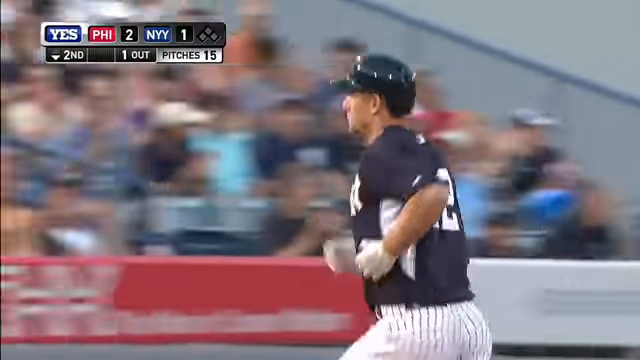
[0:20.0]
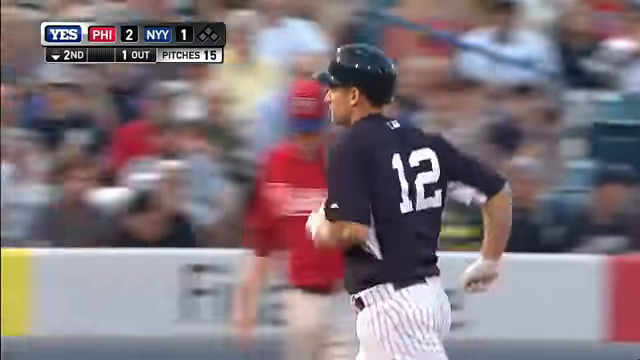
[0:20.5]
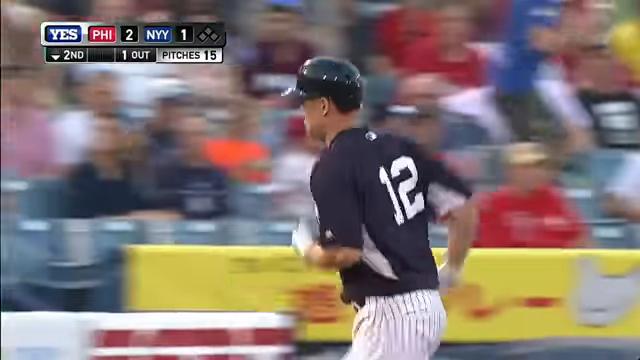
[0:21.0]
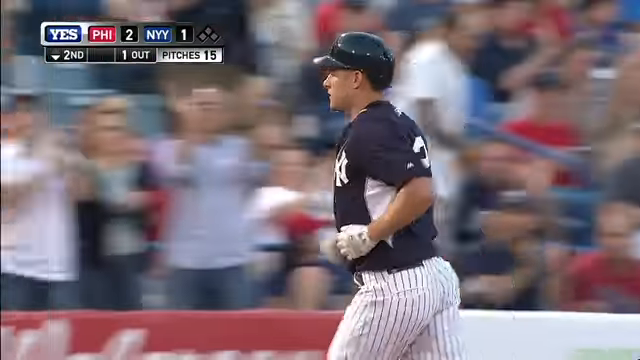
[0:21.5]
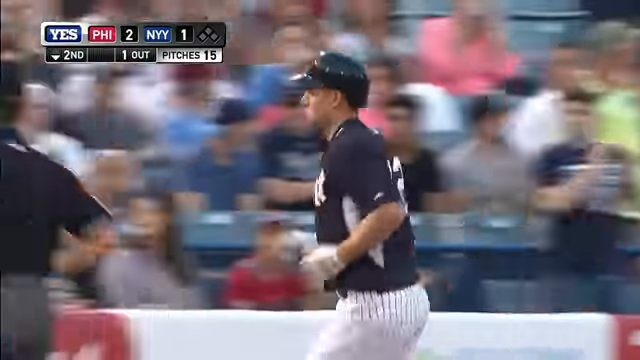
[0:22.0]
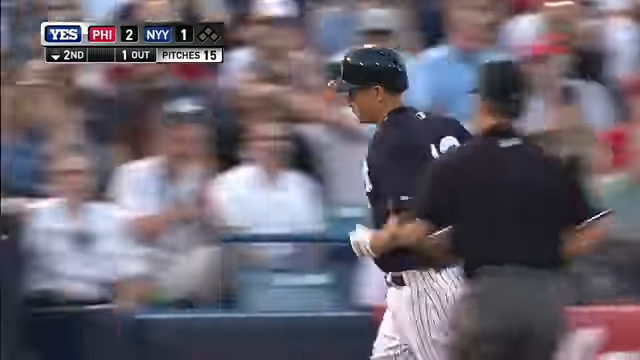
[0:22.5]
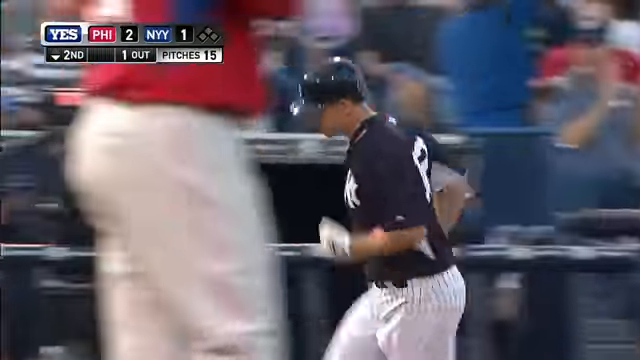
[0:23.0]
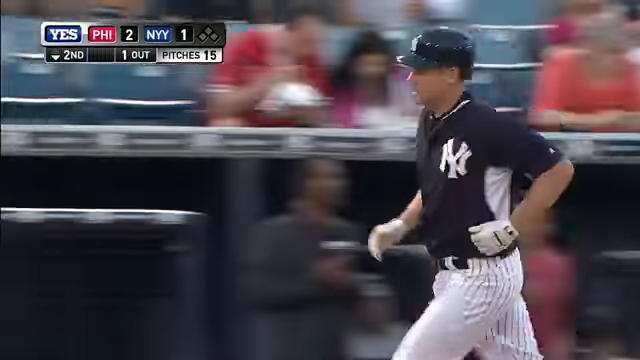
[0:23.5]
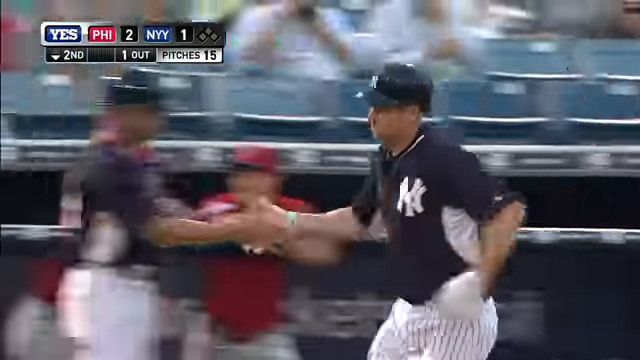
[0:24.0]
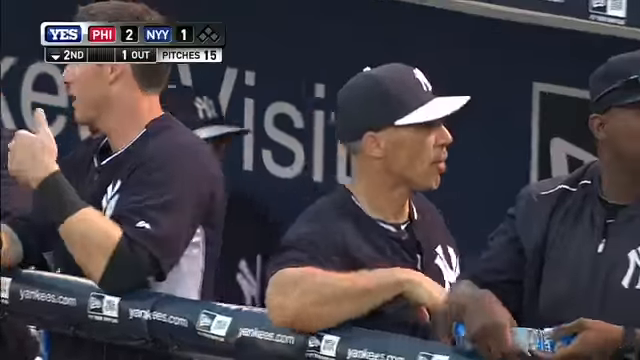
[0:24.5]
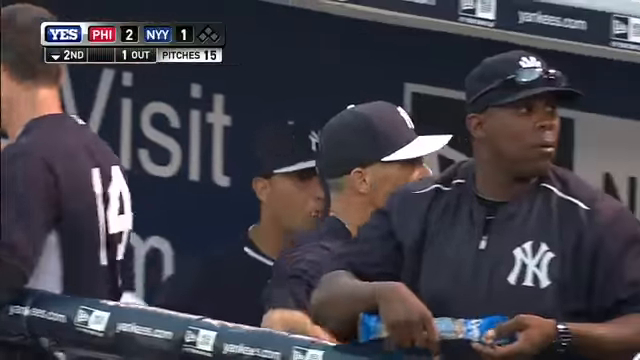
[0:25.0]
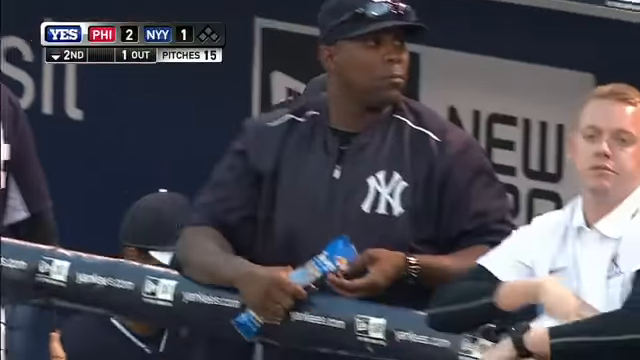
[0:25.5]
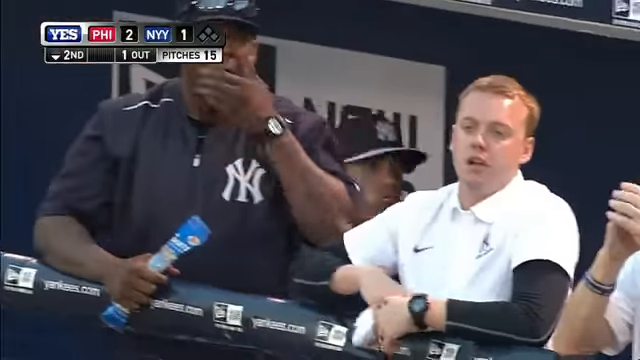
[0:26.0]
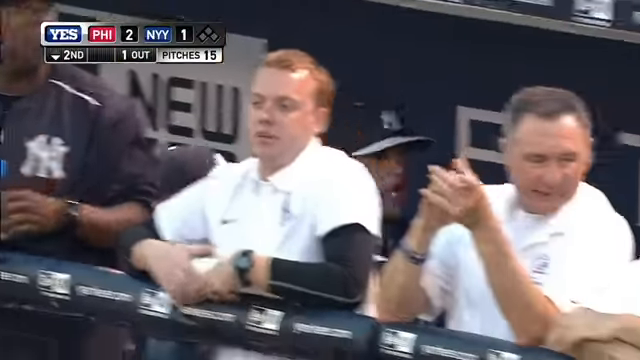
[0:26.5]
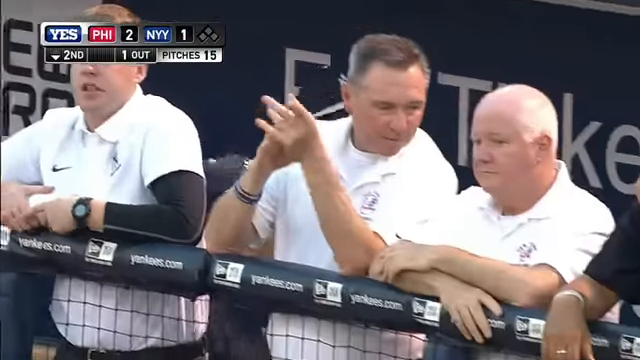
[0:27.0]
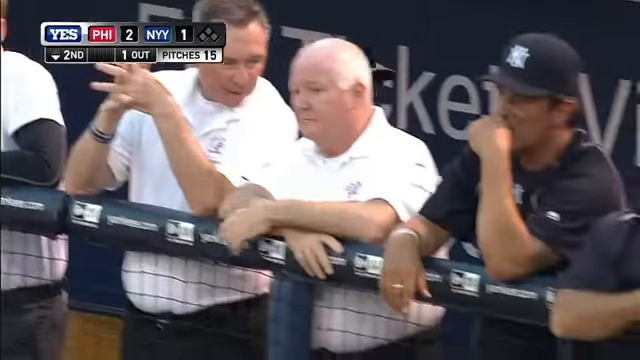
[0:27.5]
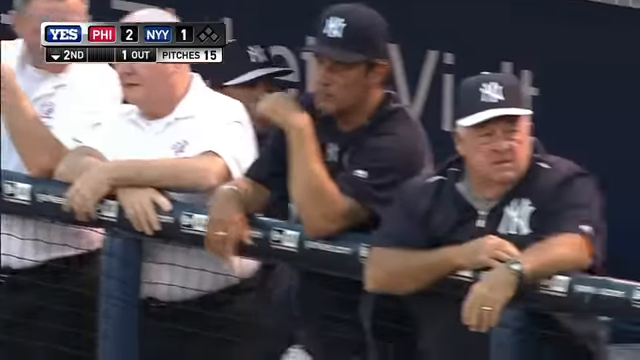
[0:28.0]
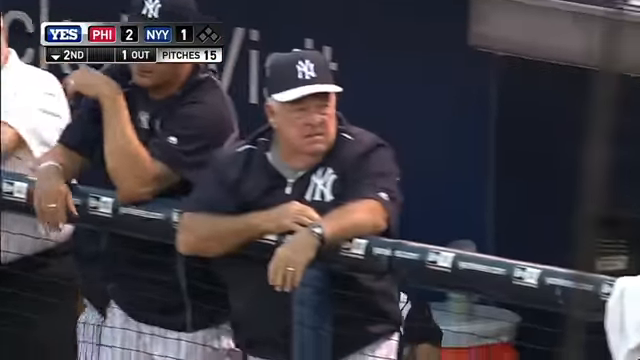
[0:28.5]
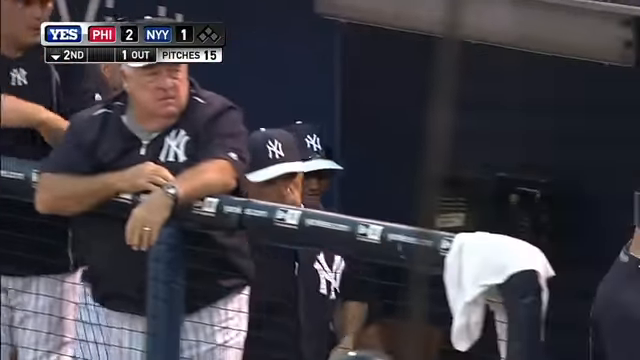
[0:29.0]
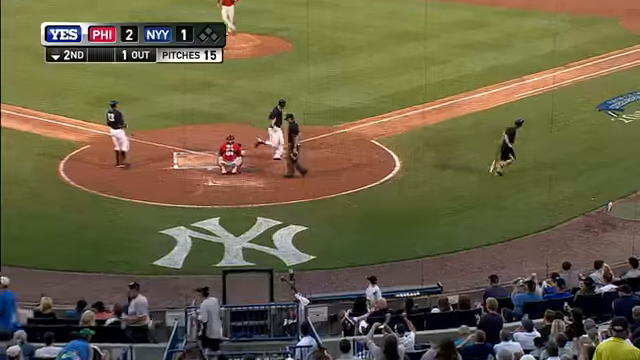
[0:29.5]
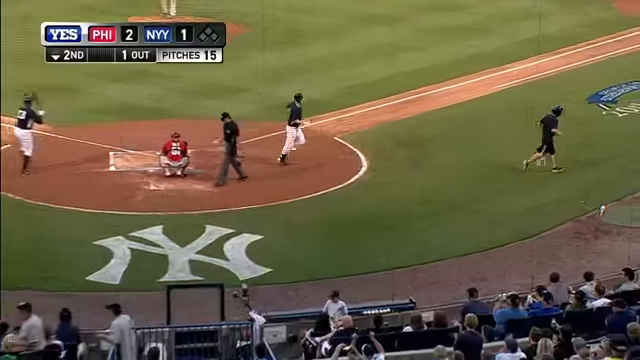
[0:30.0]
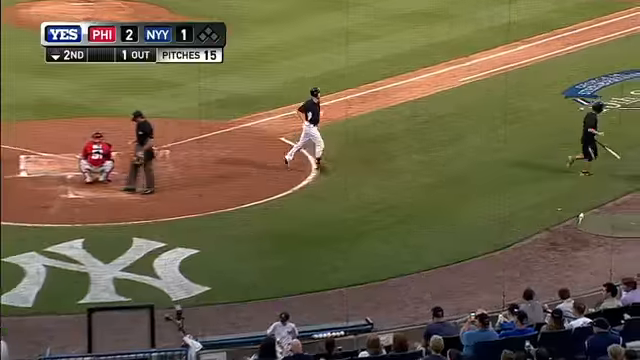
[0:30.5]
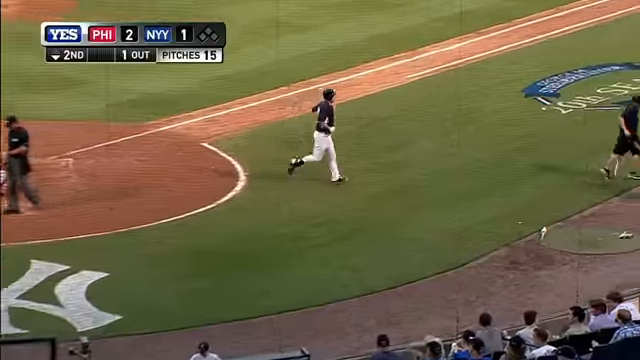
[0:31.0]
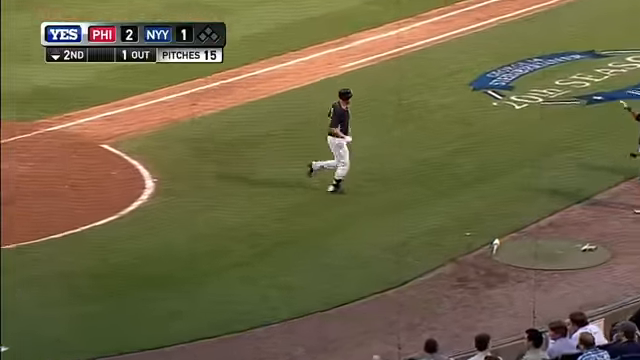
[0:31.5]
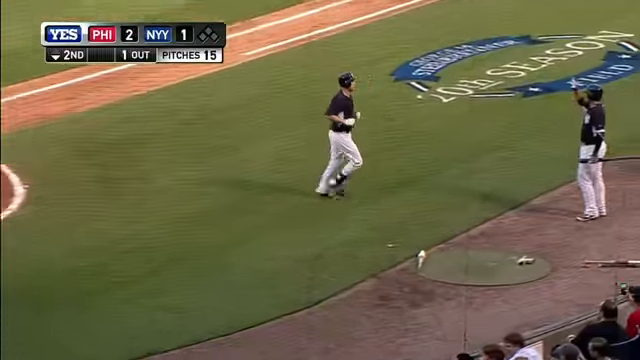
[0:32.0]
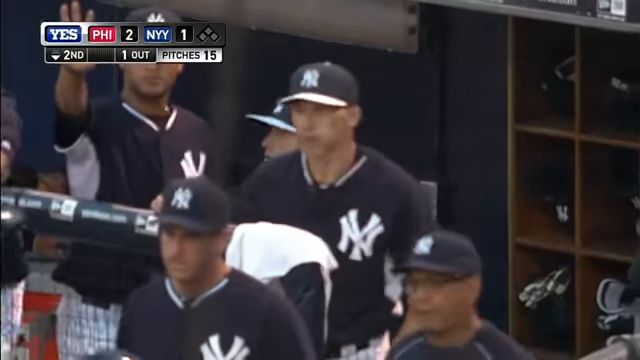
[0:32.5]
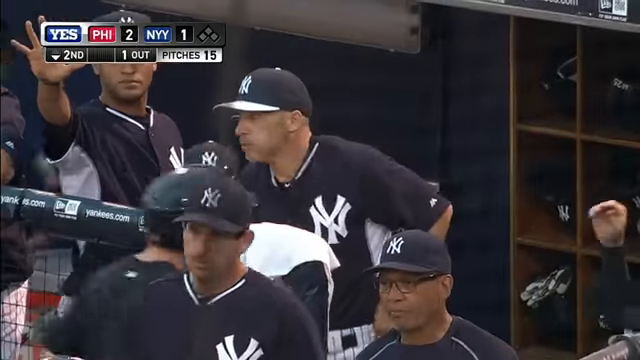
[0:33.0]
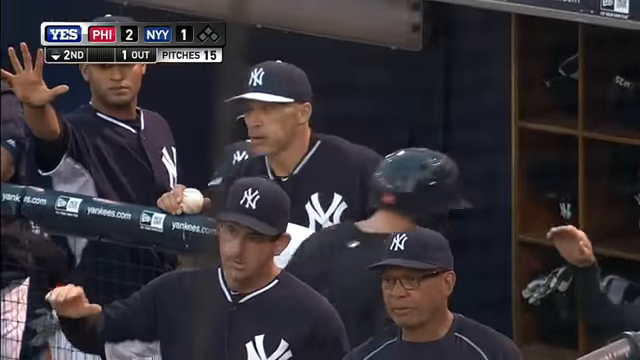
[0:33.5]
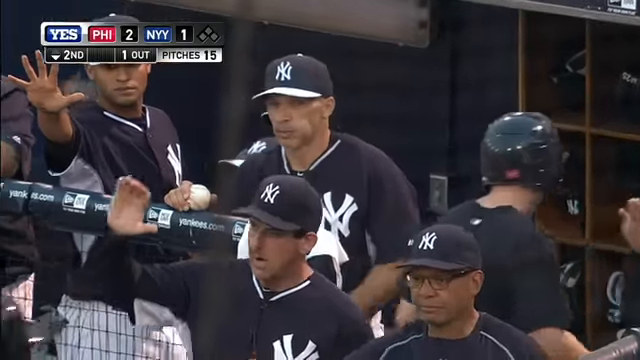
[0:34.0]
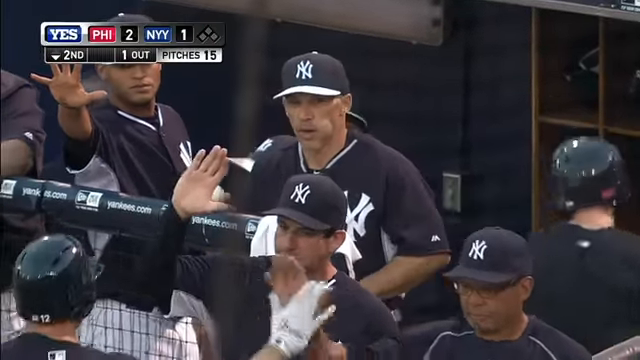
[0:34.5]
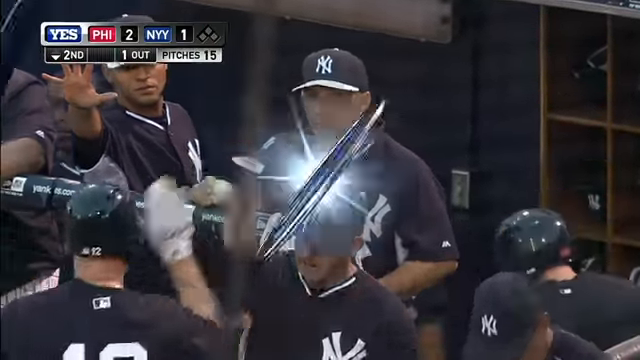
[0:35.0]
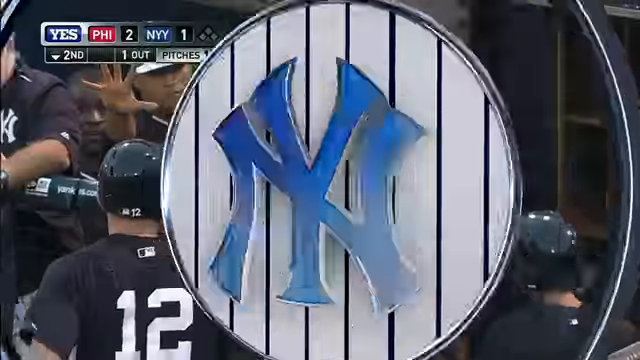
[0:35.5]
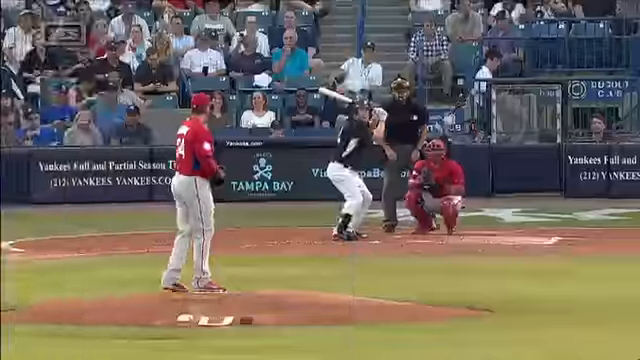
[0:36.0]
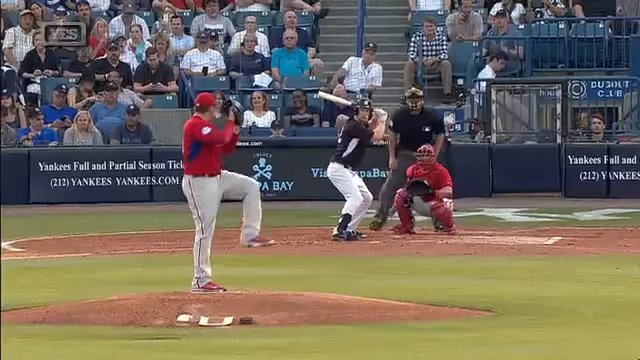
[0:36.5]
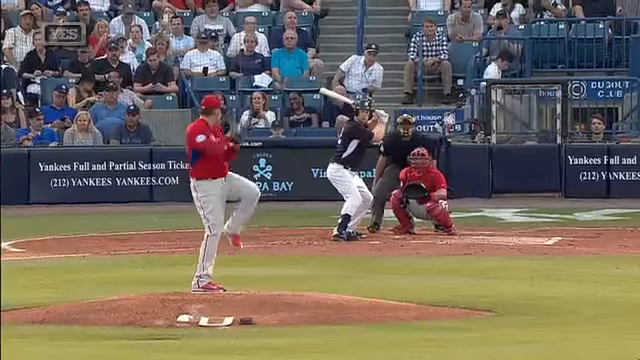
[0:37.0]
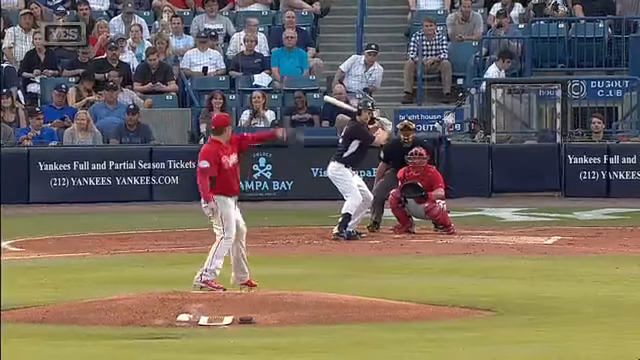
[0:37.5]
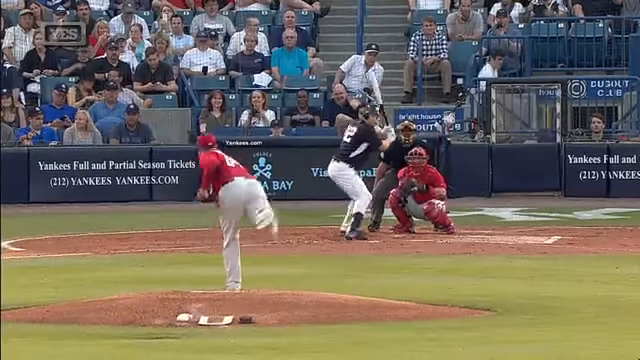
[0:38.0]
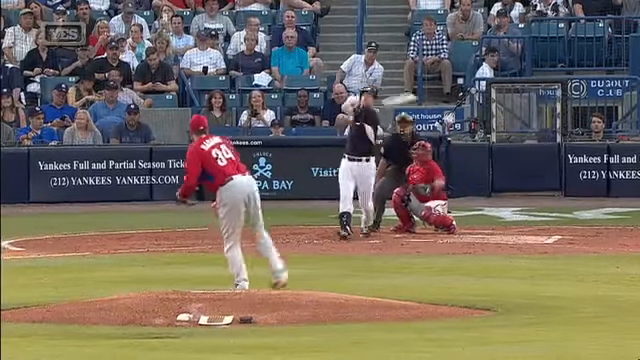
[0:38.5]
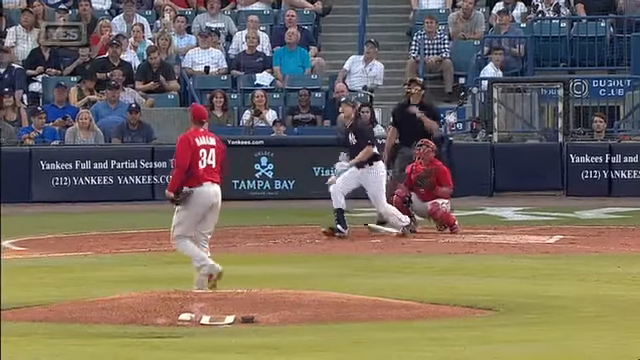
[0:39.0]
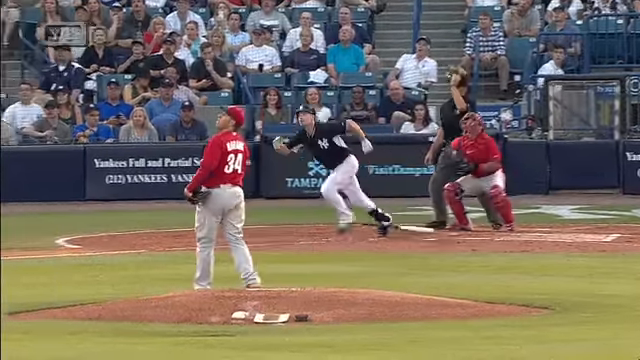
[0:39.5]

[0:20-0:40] Number 12 for the New York Yankees makes his leisurely run around the pitch after his hit out of the ground, while spectators try to find the ball. A New York Yankees supporter in a New York Yankees top eats a snack, and behind the New York Yankees dugout players or supporters move around. Number 12 runs off the pitch to his teammates, with lots of high fives. The shot of his leisurely run around the four corners is shown again; he has time to shake people's hands on the way round. The players high-five the coaches on the way past, the crowd on the New York Yankees side is very pleased, and the Philadelphia team can only look on.